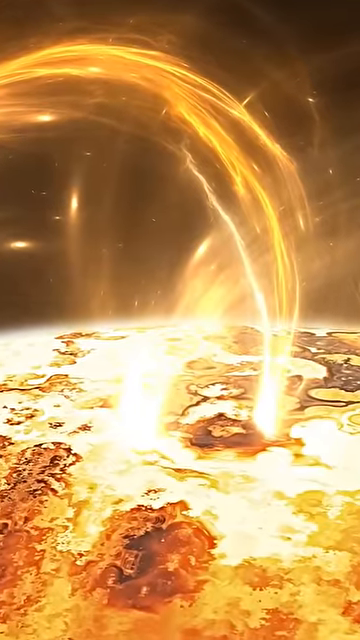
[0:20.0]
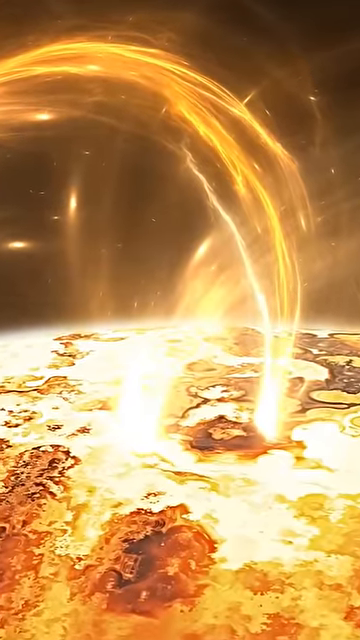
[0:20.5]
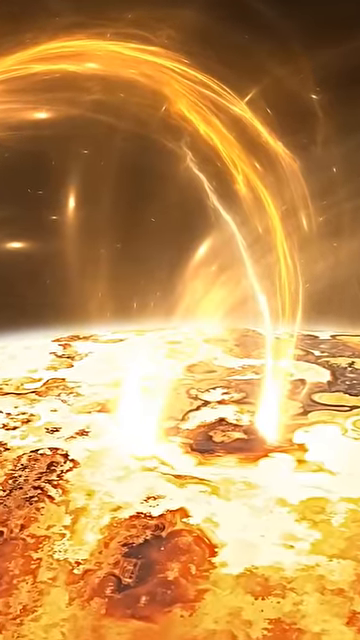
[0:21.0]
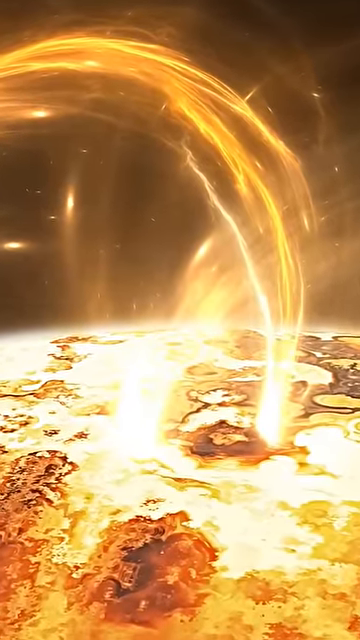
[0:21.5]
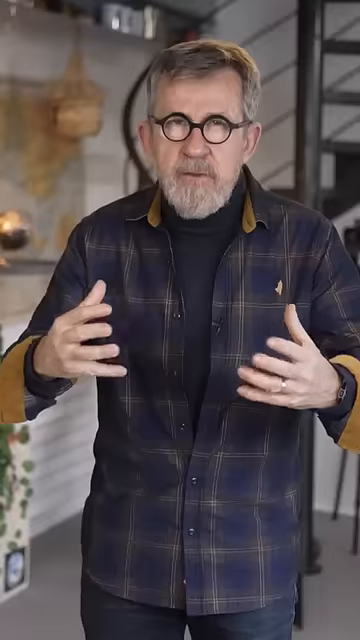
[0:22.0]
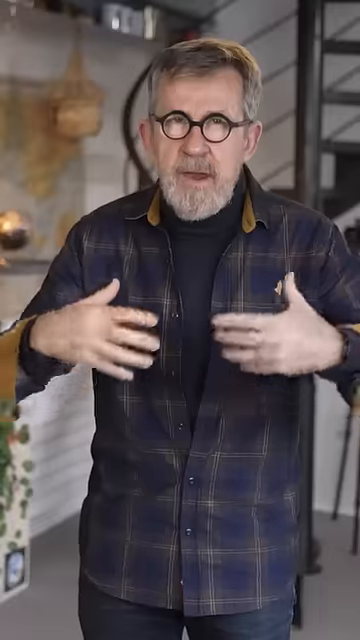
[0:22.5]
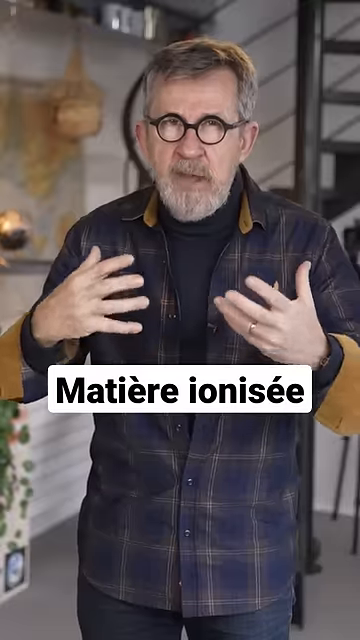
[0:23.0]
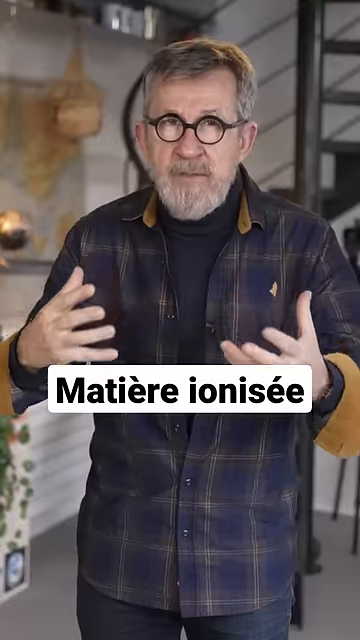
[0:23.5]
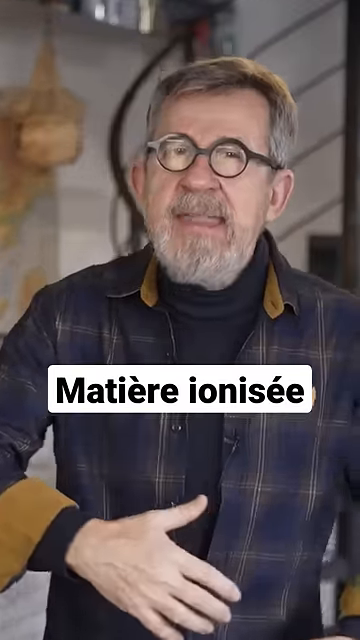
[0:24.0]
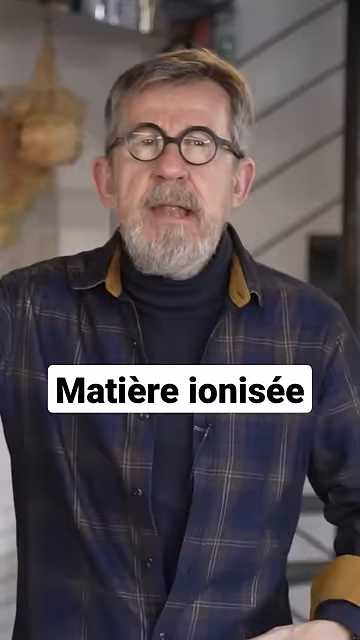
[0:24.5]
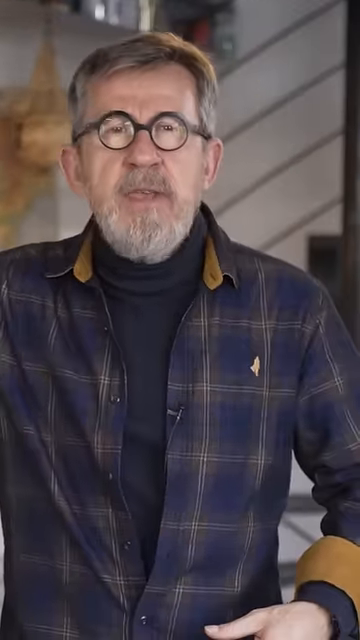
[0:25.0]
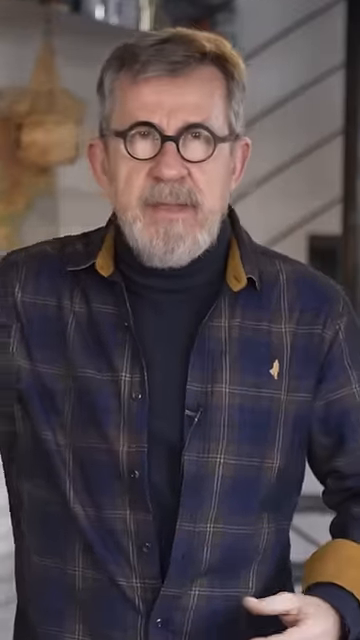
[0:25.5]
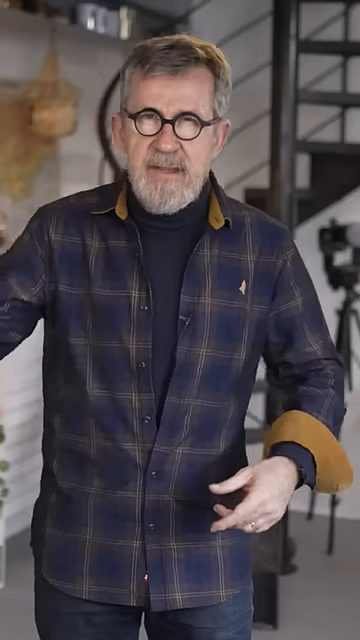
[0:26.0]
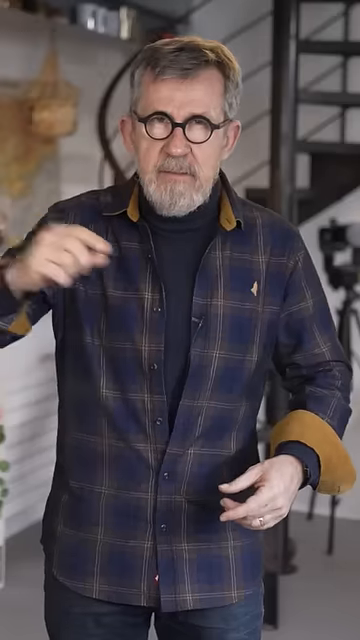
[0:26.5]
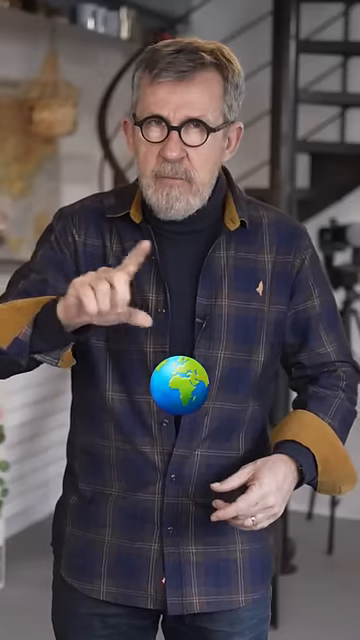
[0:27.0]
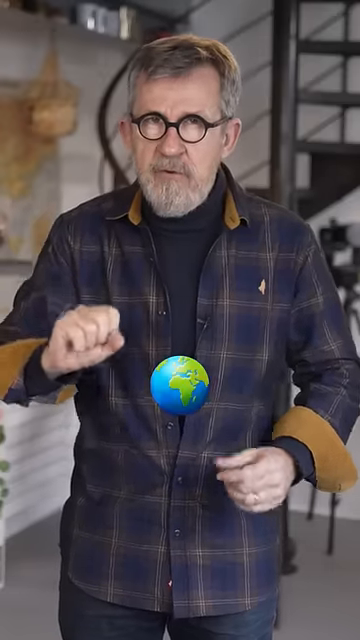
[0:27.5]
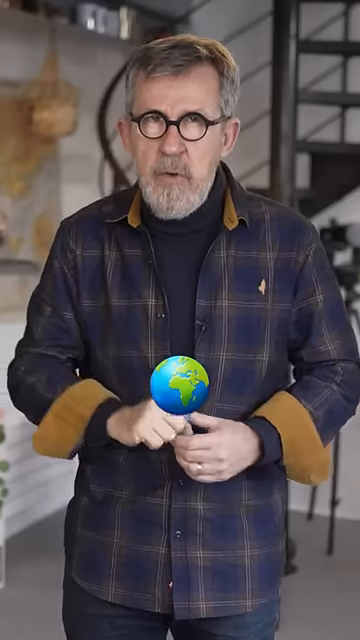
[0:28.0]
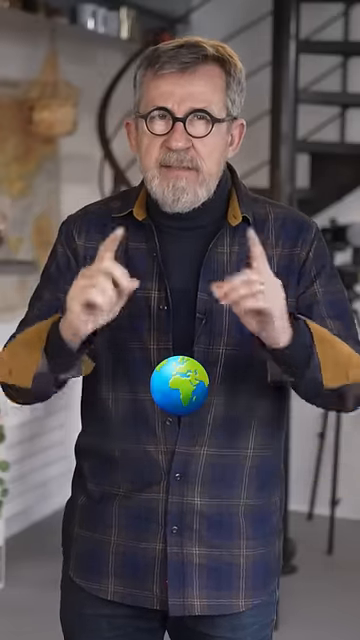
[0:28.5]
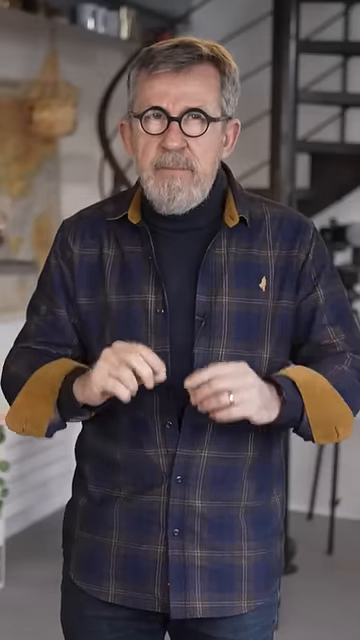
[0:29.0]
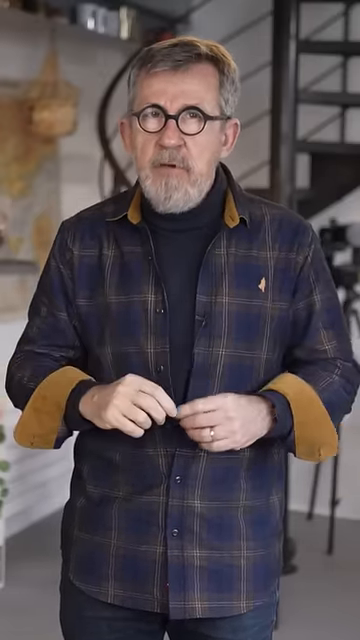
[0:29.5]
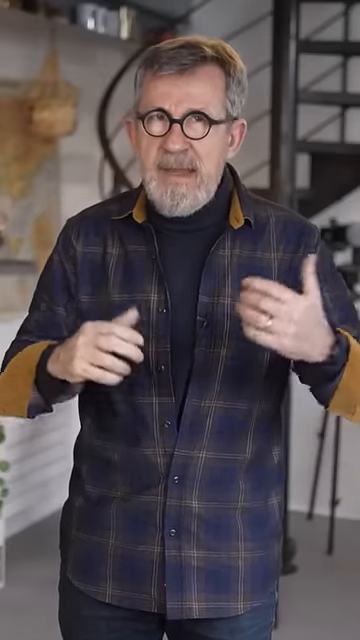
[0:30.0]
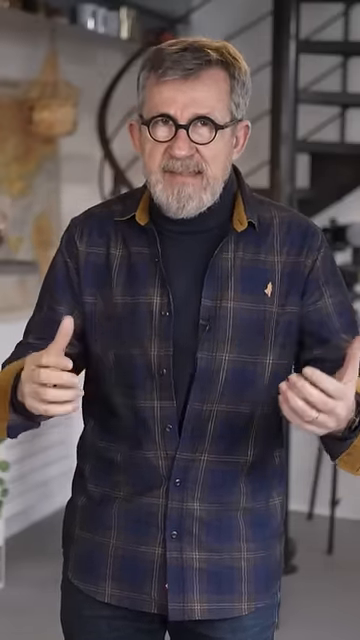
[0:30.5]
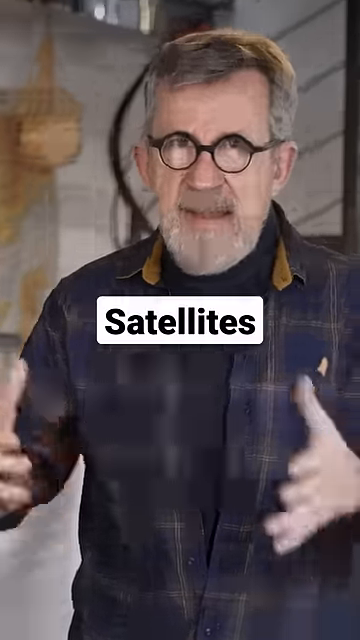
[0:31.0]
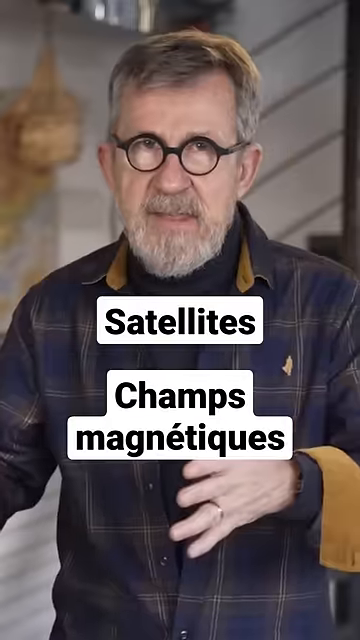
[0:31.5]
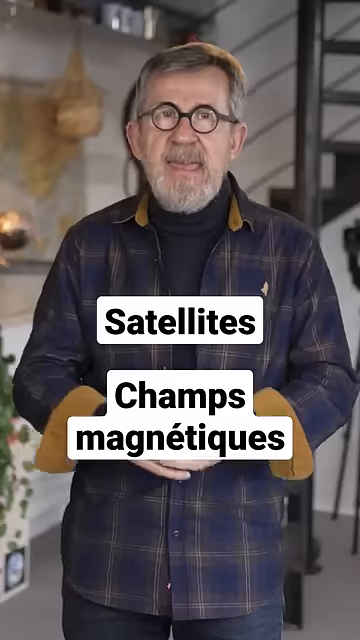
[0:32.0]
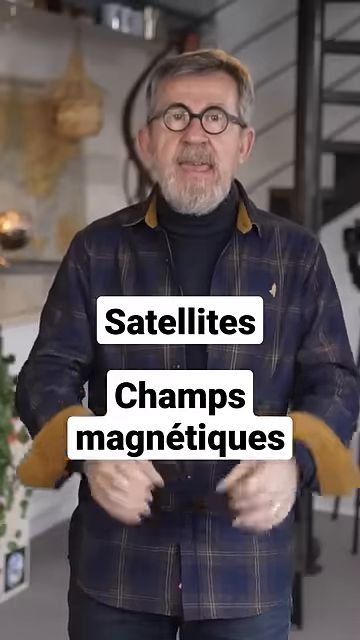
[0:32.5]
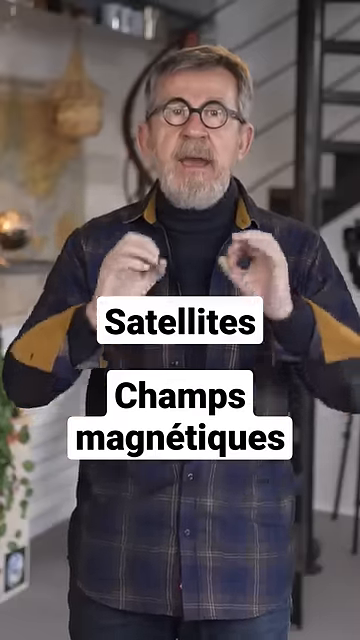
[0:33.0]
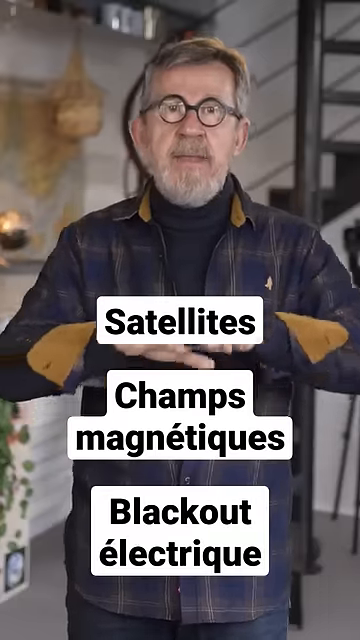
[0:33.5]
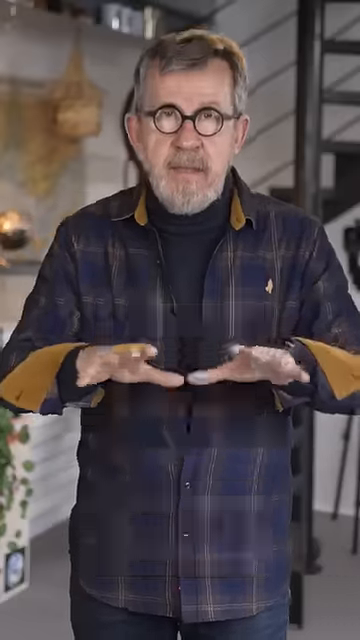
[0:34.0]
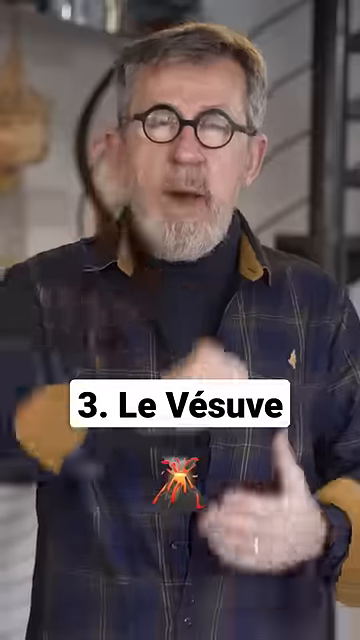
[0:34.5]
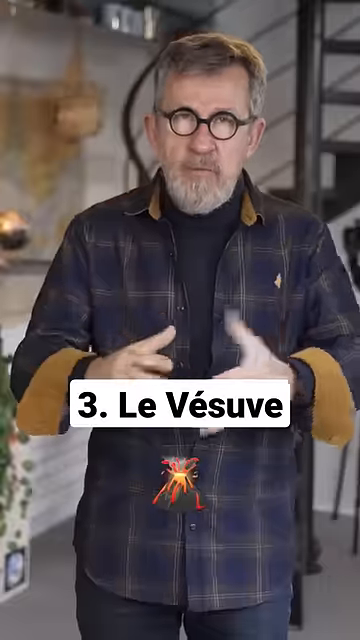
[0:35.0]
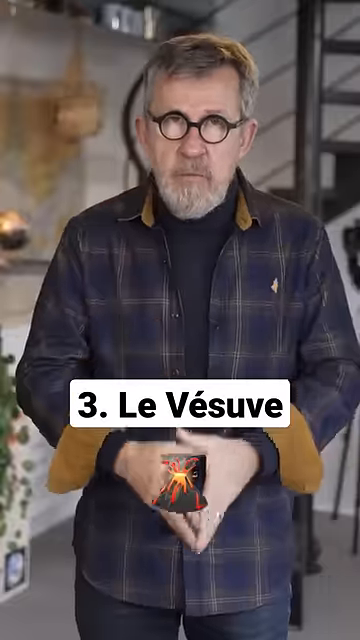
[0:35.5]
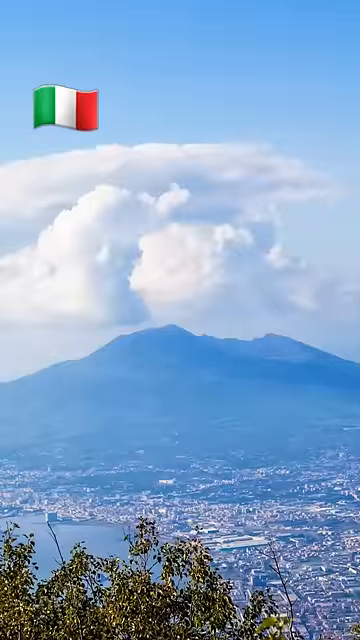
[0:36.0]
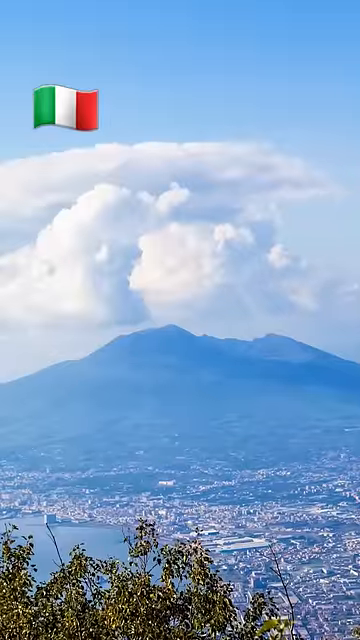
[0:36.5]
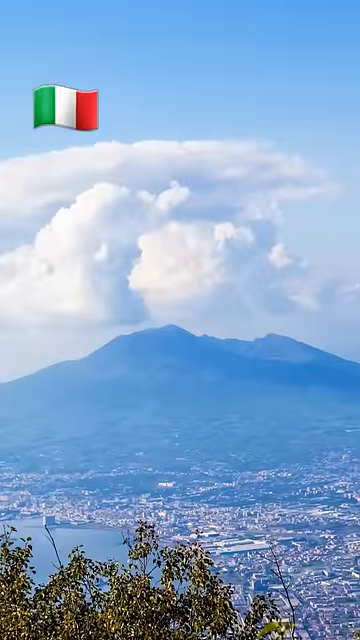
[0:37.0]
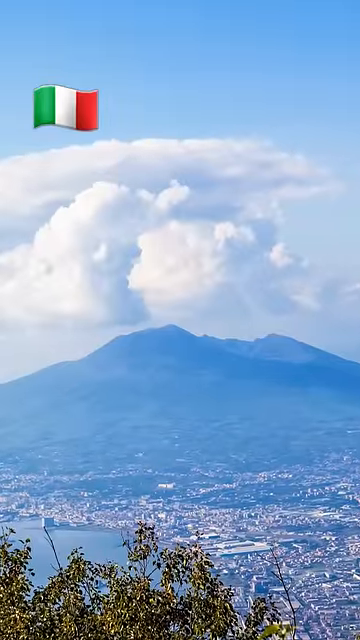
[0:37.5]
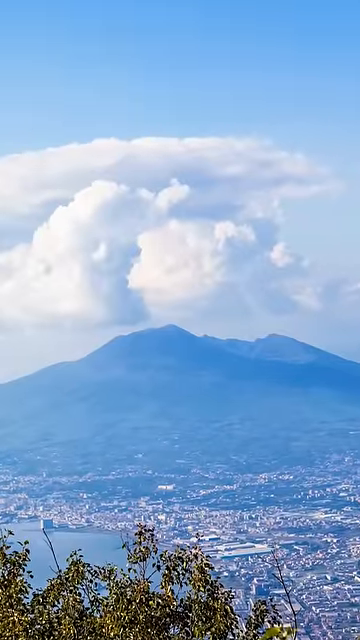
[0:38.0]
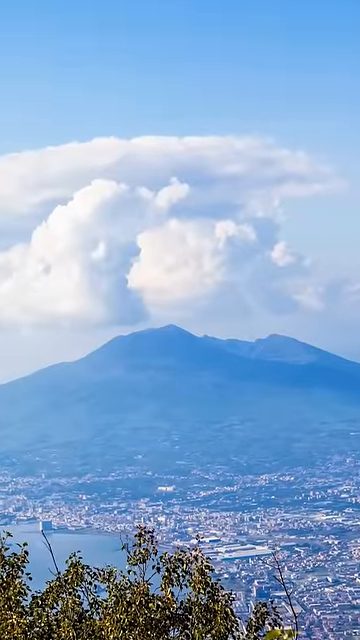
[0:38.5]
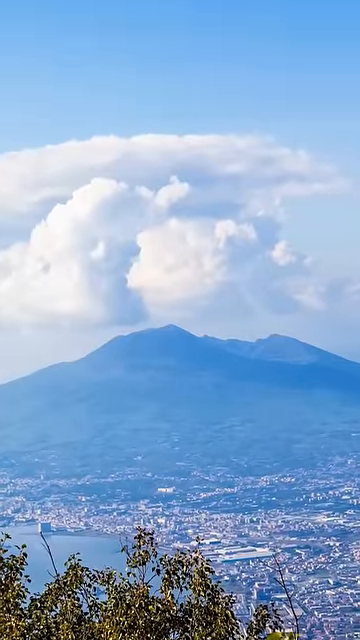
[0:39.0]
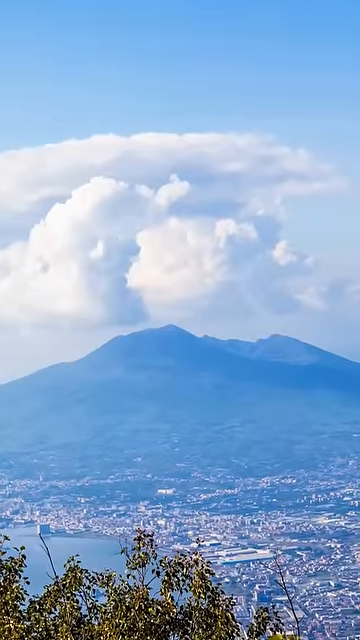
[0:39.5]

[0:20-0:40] The video opens on a visual representation of what may be magma, then cuts back to the single man talking. He is a little less energetic, in a really low-energy stretch, but still uses his hands as he speaks. Different volcanoes are shown.